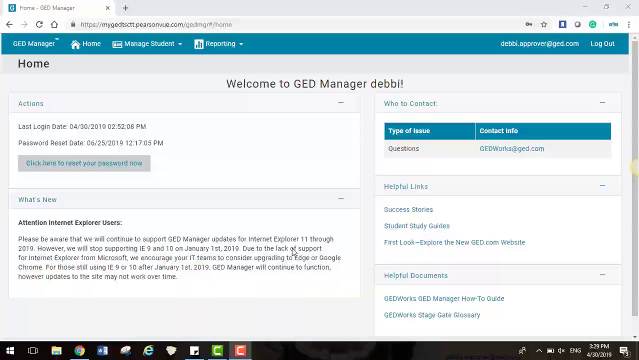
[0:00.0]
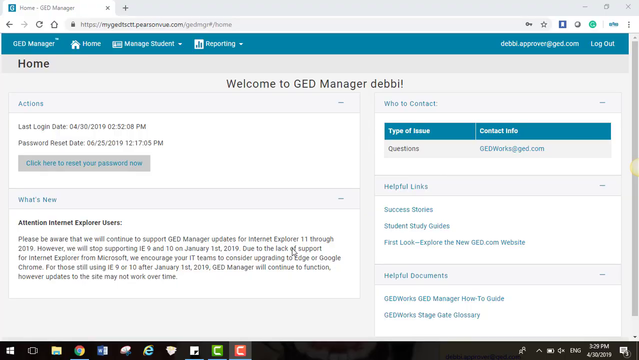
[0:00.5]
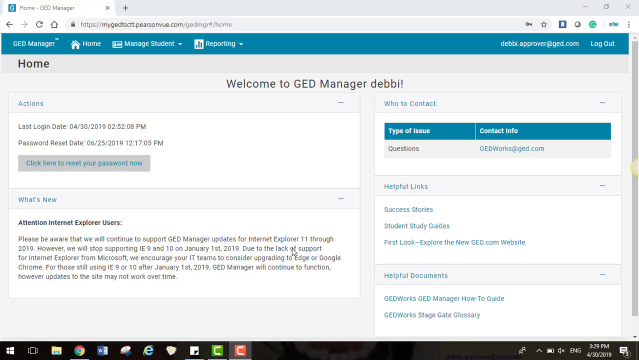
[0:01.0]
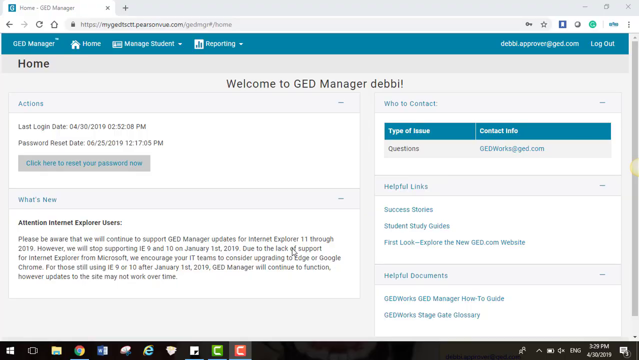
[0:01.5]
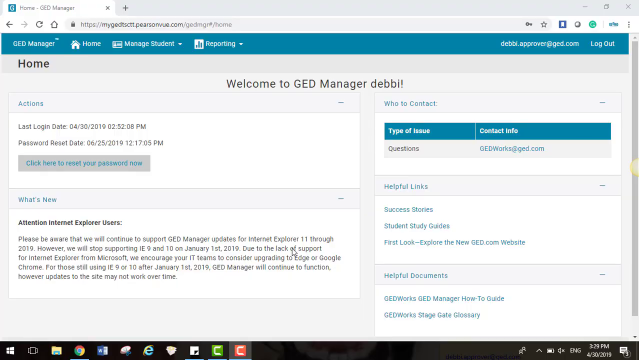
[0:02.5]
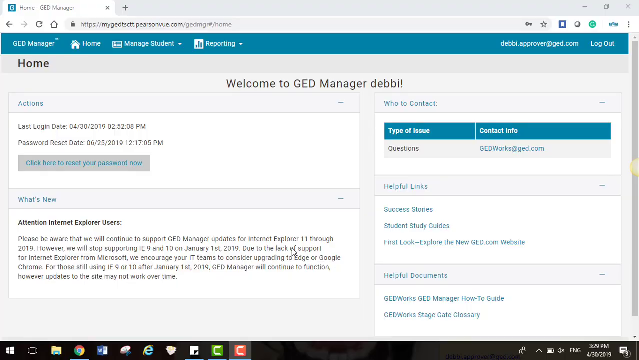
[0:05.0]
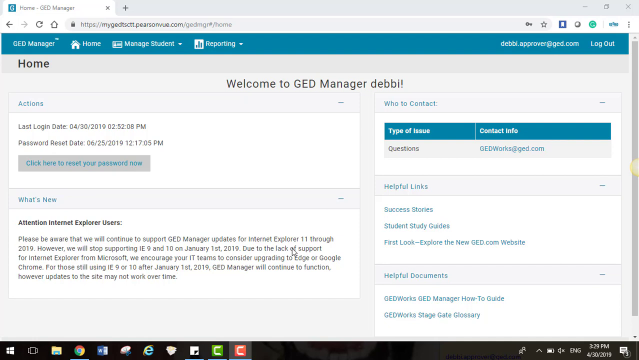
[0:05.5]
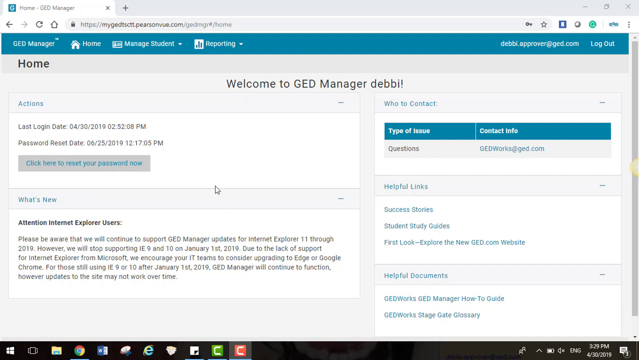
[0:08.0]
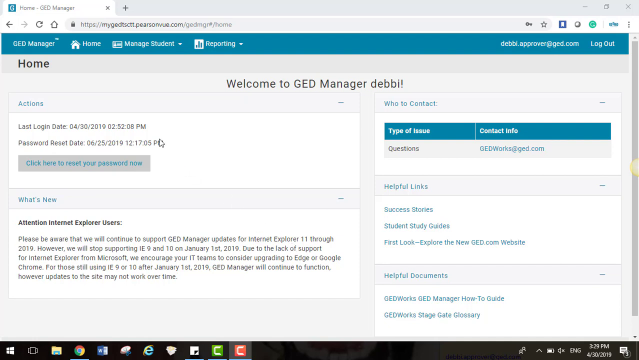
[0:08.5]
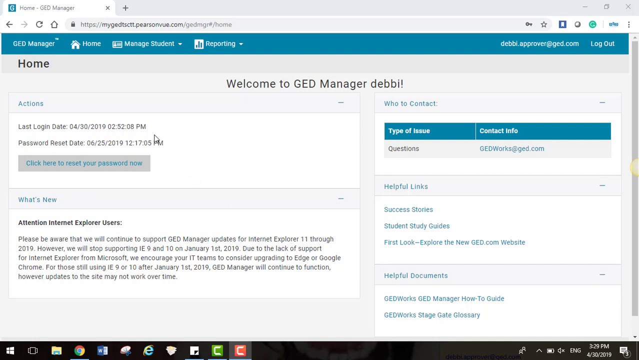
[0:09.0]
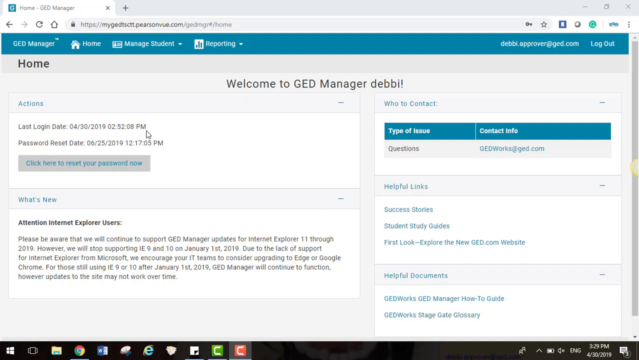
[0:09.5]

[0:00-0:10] A computer screen is being recorded, showing a maximised internet browser with one tab open. The tab displays a website called GED Manager, where the user is signed in as a user called Debbi. The top left section shows actions such as last login date and password reset date, along with an option to reset the password. Below that is a what's new section with some updates. On the right side there is a who to contact box with a help desk email address, and below it are helpful links and helpful documents sections. A cursor in the middle of the screen moves up to the left side, where the action section is.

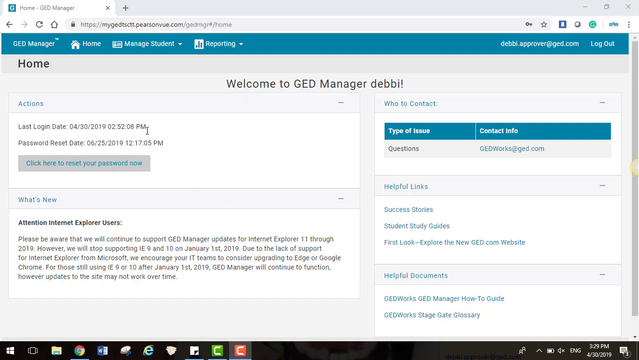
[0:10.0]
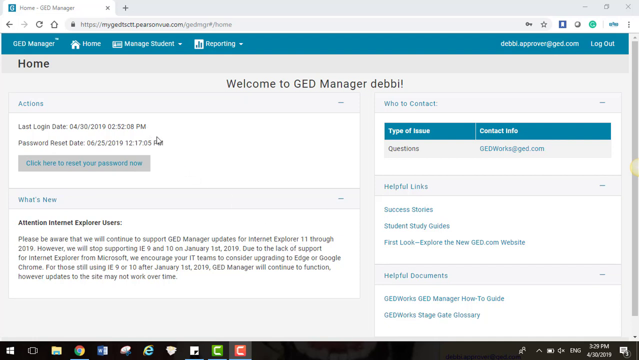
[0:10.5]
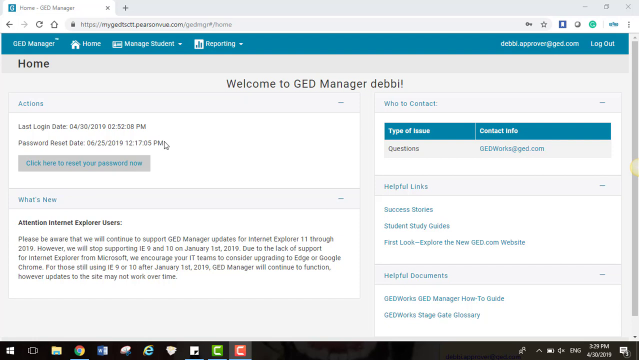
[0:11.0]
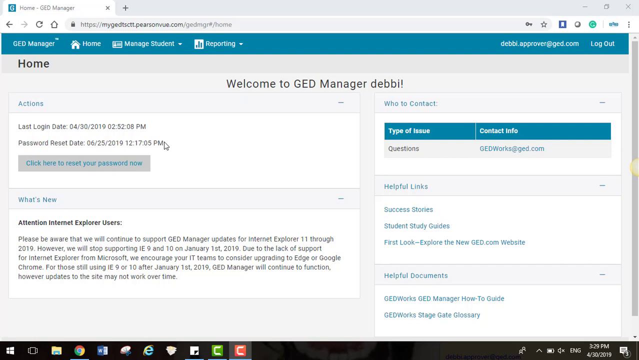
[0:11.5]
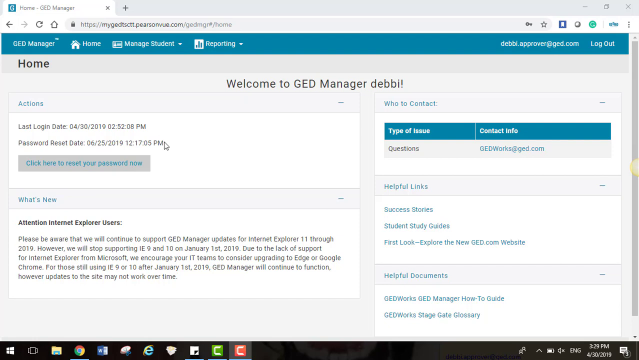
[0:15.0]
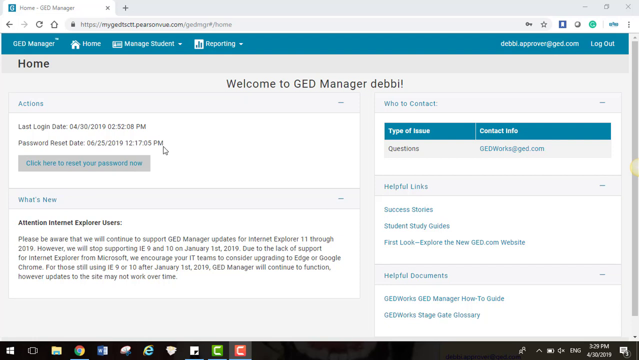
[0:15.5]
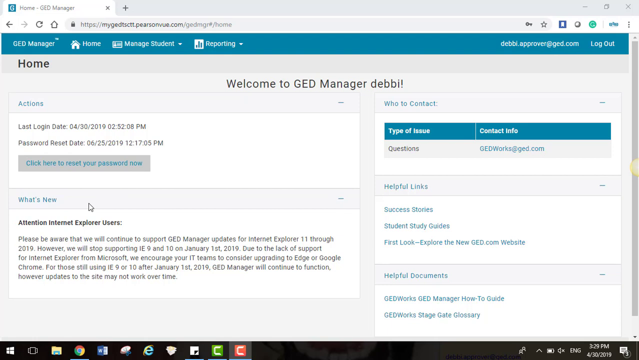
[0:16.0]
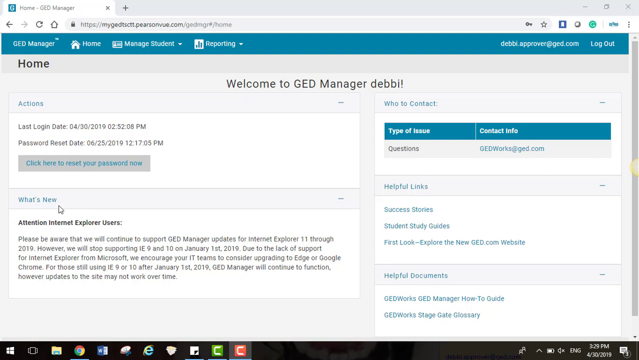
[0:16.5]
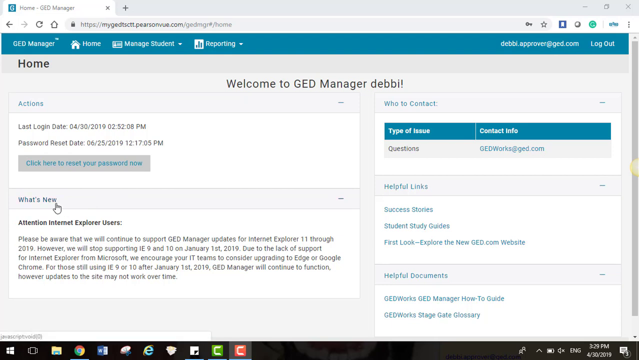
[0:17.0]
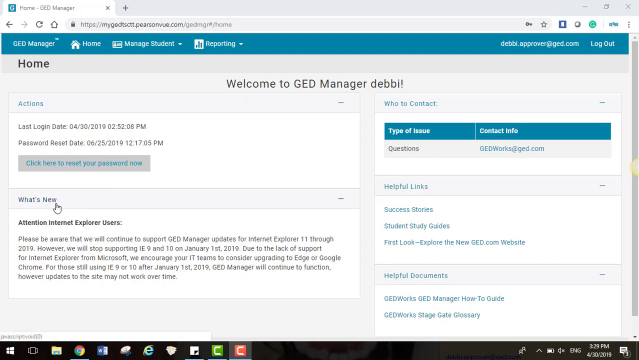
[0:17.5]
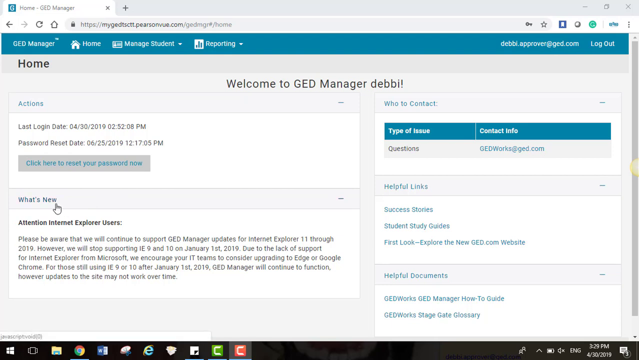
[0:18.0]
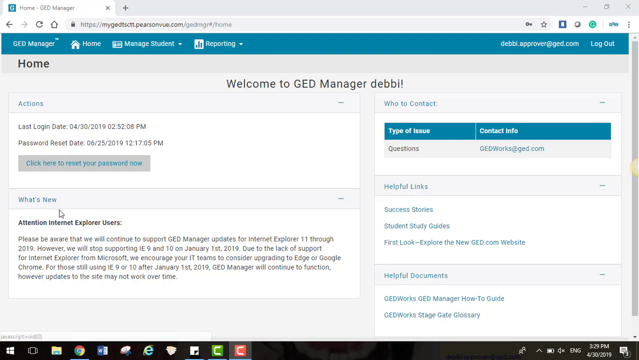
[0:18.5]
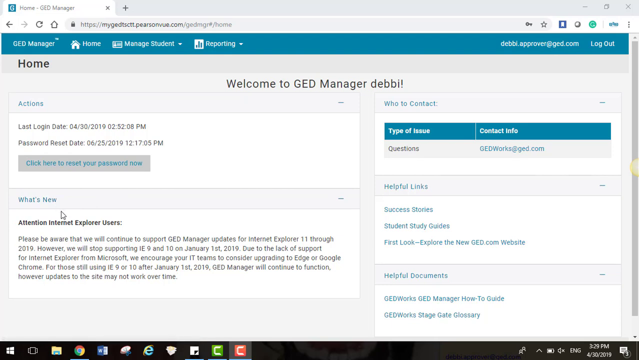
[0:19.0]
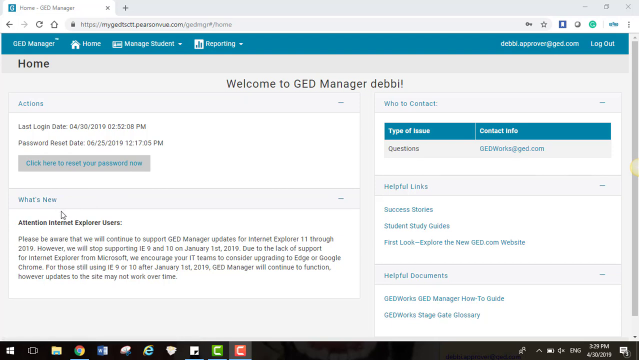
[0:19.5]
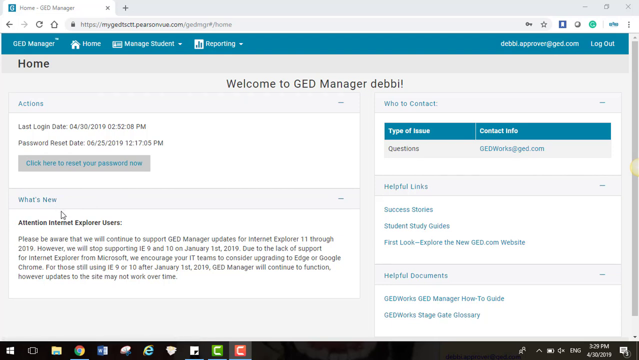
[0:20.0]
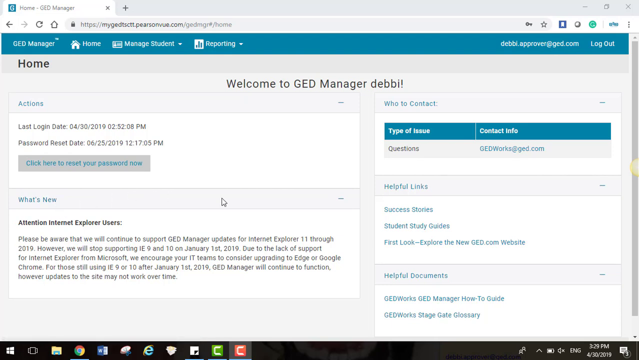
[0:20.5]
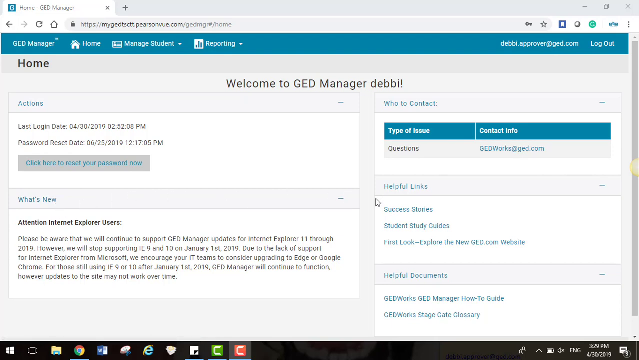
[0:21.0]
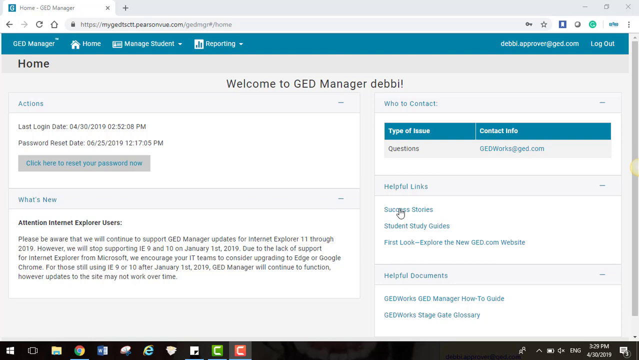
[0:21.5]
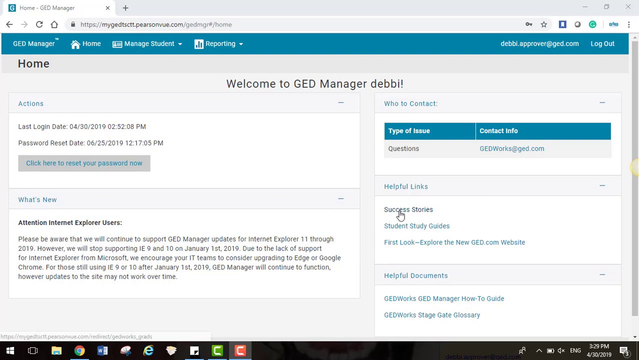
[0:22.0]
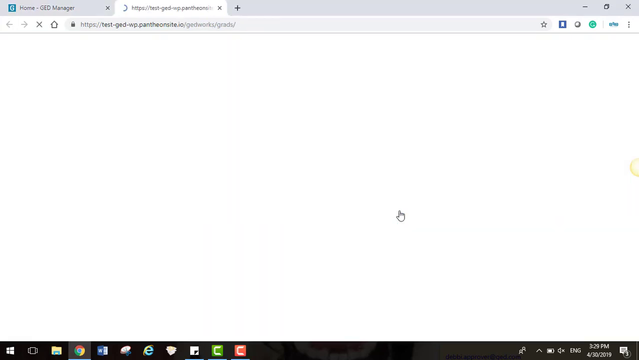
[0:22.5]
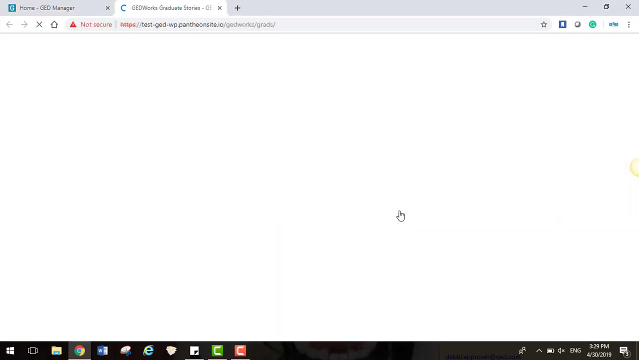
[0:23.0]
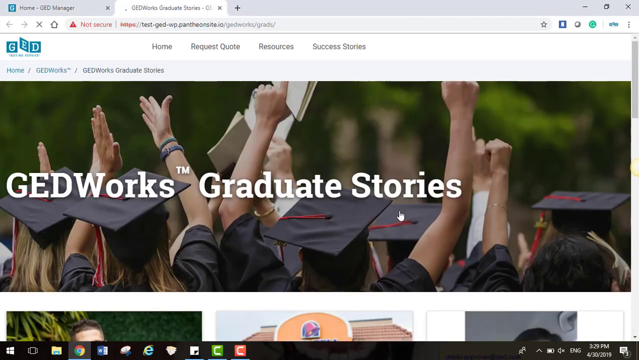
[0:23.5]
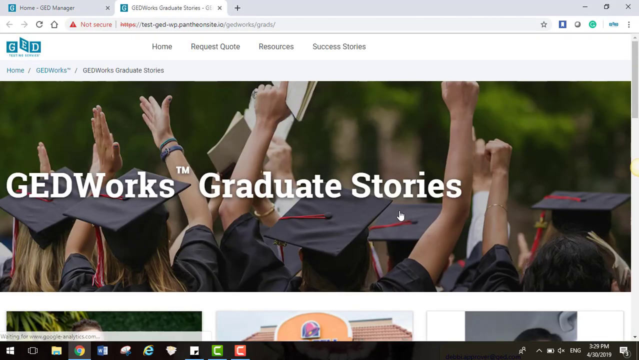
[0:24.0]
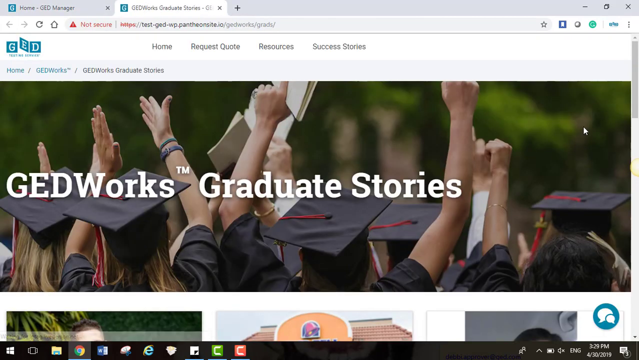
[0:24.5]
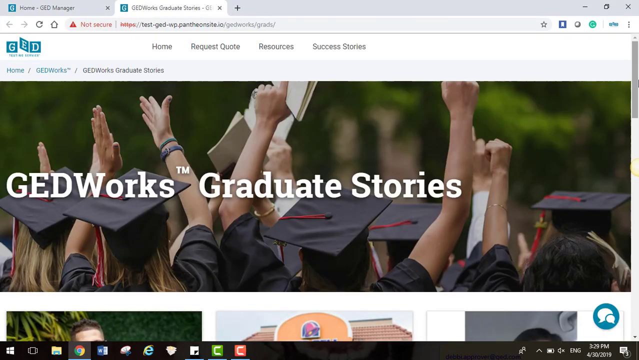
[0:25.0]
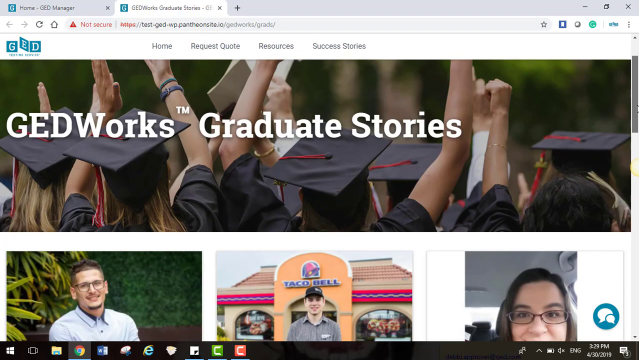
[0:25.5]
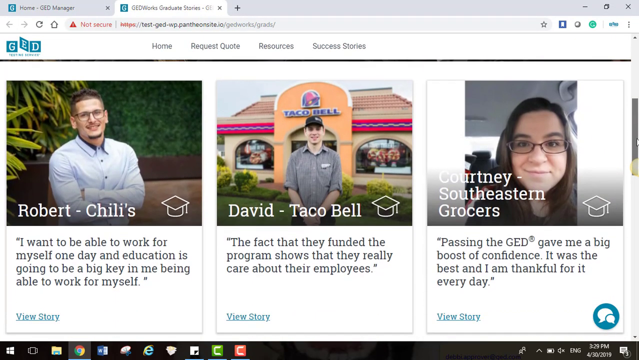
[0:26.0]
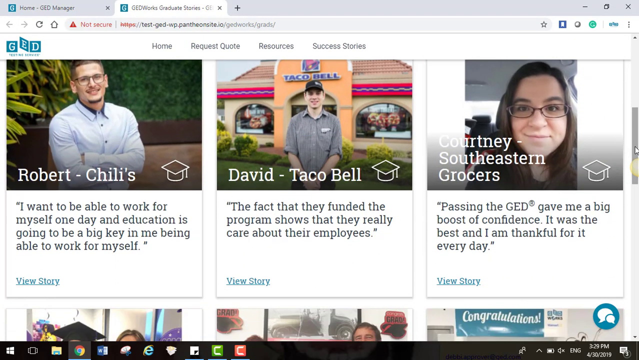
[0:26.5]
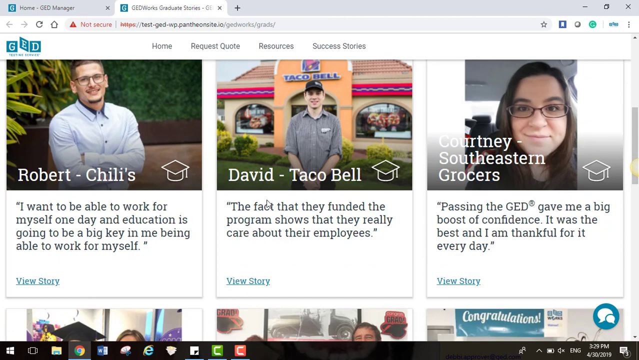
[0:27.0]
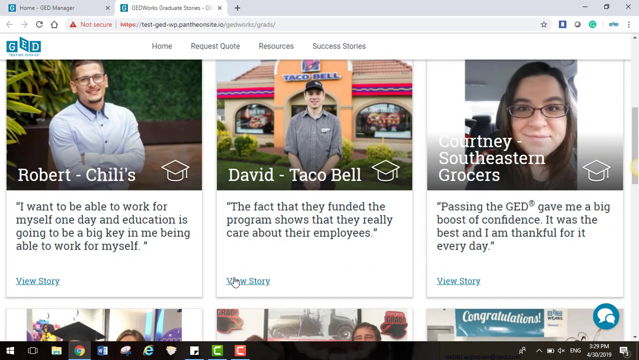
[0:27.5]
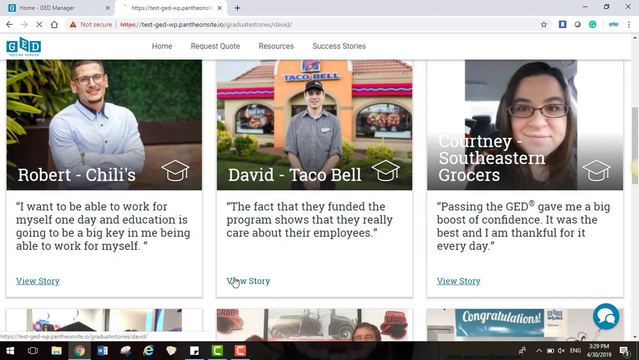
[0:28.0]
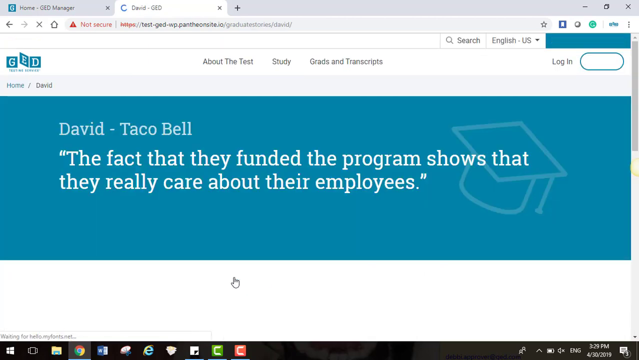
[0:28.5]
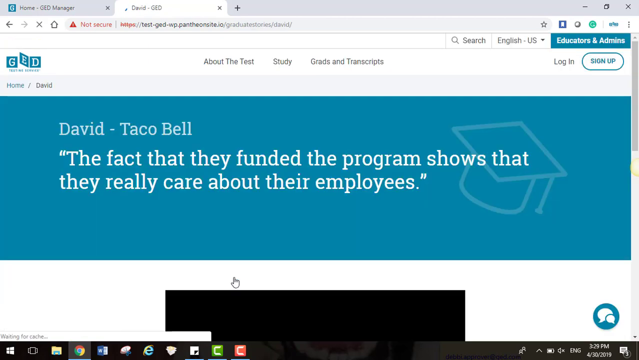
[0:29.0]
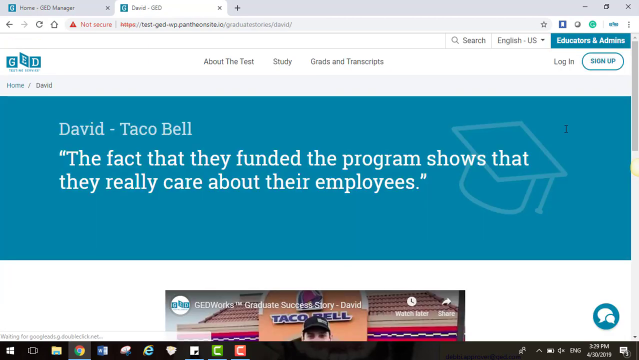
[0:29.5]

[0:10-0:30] A recording of a computer screen shows a user interacting with the computer. An internet browser fills the whole screen with one active tab, on a web page called GED manager, where the user is signed in as Debbi. The cursor begins in the top left section of the screen and moves down to the middle left, to a section that says what's new, and hovers over the what's new hyperlink. The cursor then moves to the right side, where in the middle there is a section called helpful links with three hyperlinks beneath it. The user selects the top one, called success stories, which opens a new tab. Once the new tab loads, the user scrolls down the page with the right side scroll bar. The page has multiple images, each with a person attached to it, a small description and a view story hyperlink. The user selects the first row middle image, for David at Taco Bell, and clicks its view story hyperlink. These are stories for graduates at GEDworks.